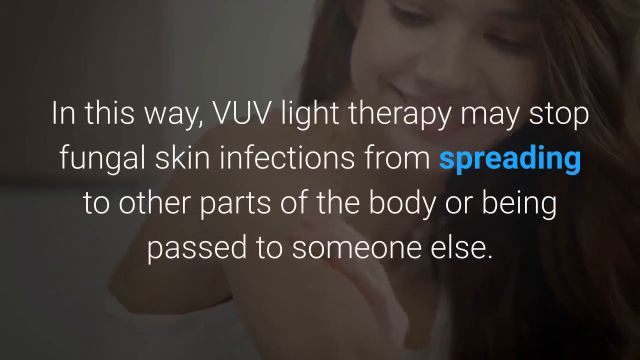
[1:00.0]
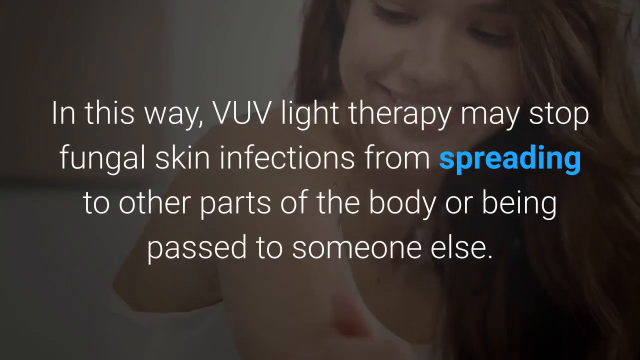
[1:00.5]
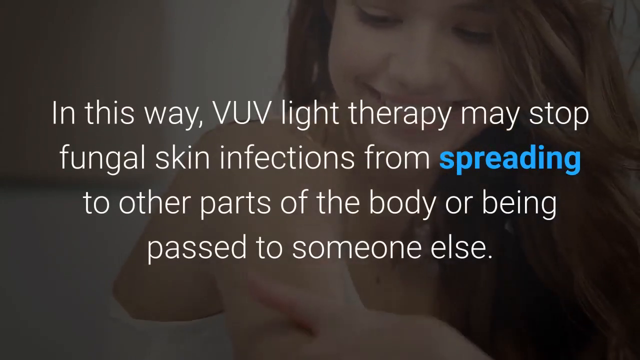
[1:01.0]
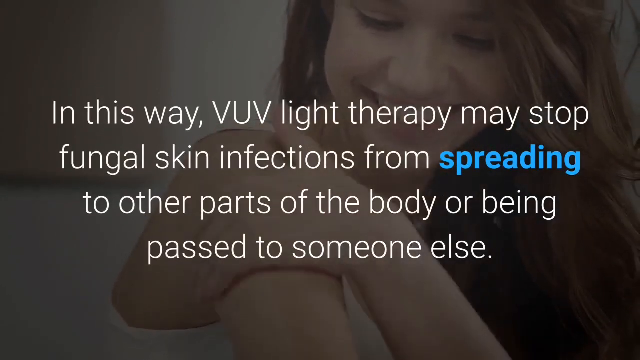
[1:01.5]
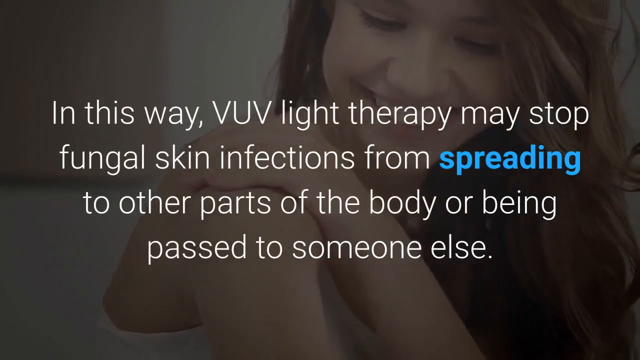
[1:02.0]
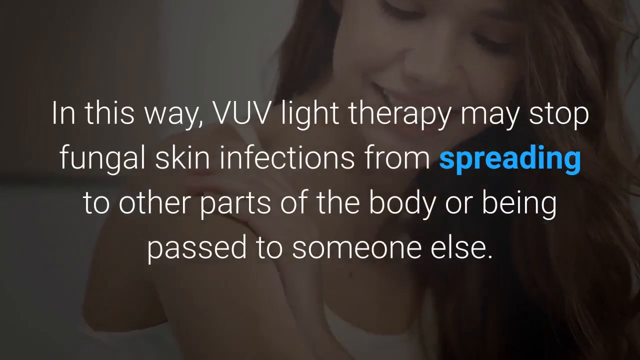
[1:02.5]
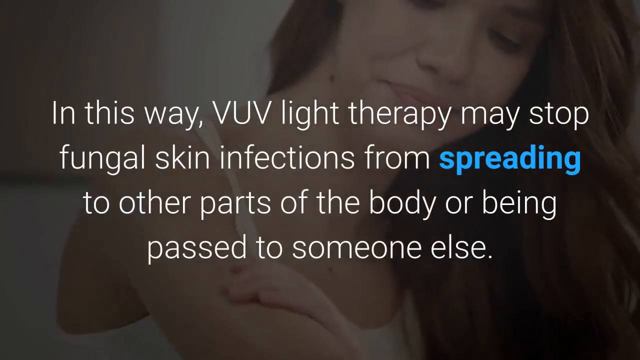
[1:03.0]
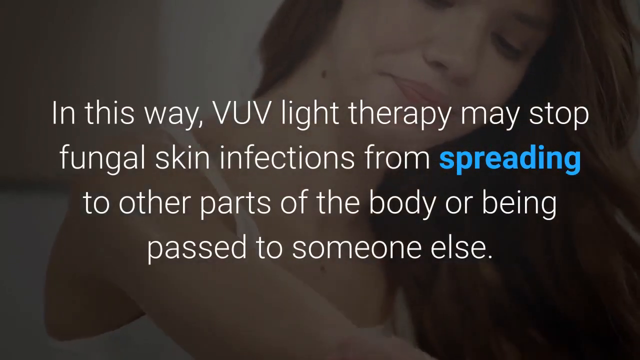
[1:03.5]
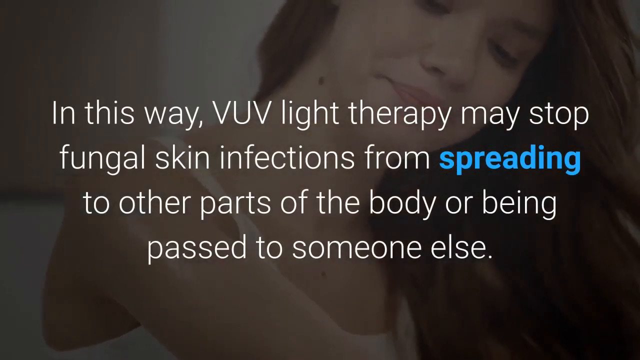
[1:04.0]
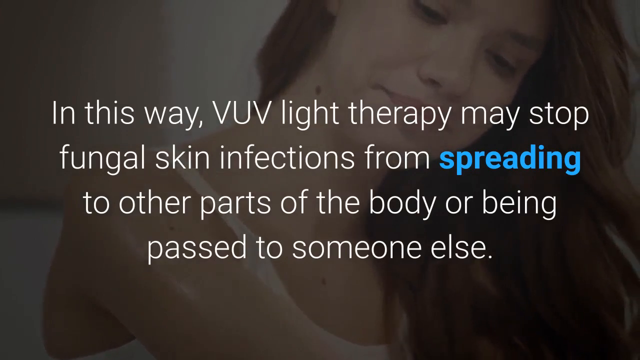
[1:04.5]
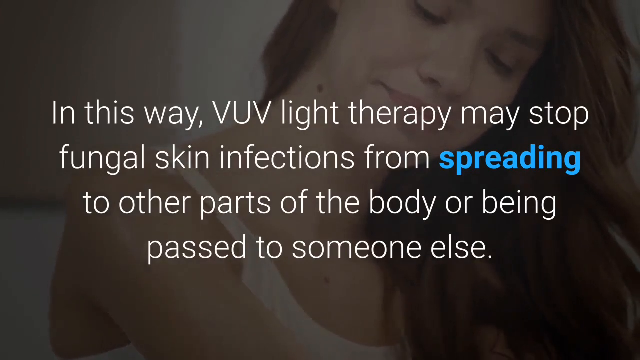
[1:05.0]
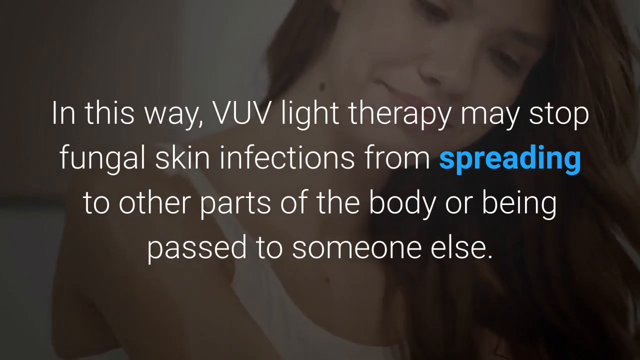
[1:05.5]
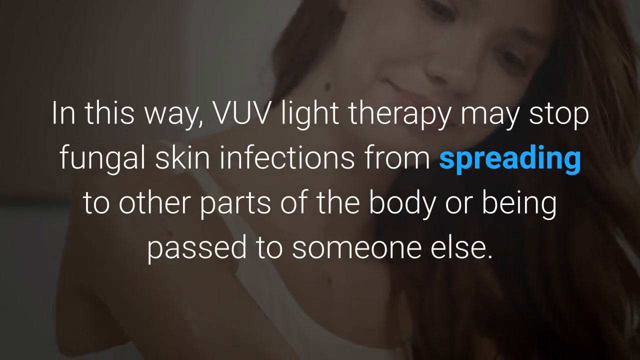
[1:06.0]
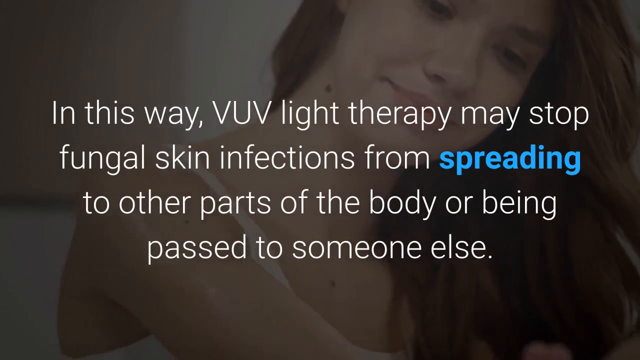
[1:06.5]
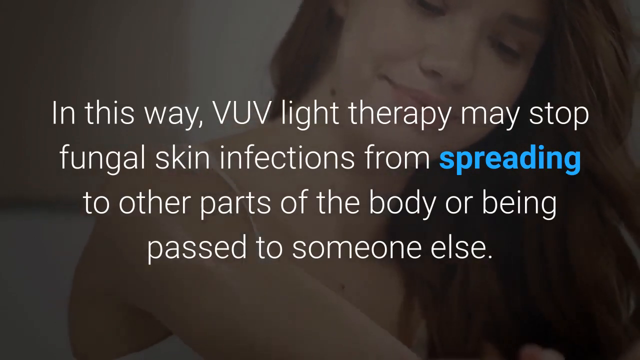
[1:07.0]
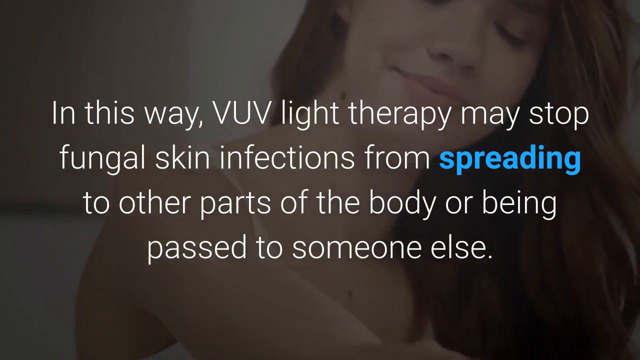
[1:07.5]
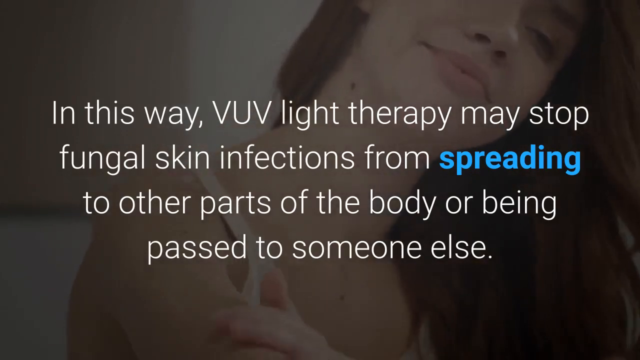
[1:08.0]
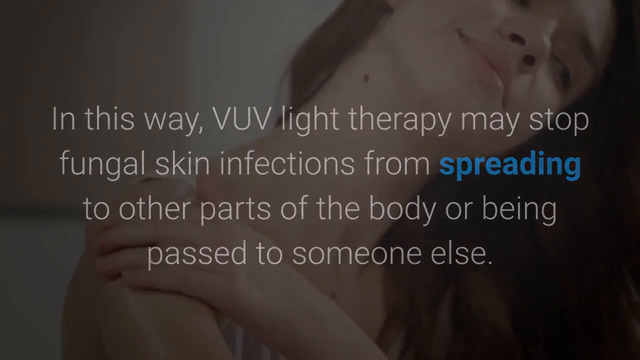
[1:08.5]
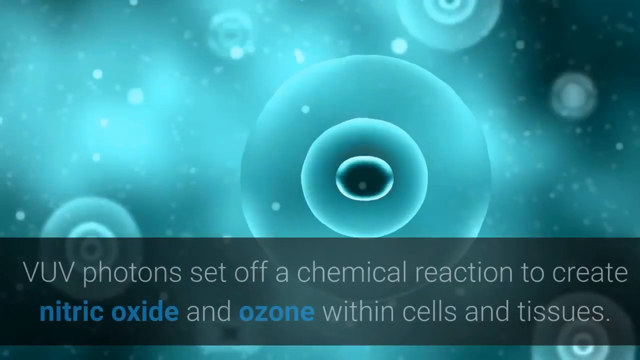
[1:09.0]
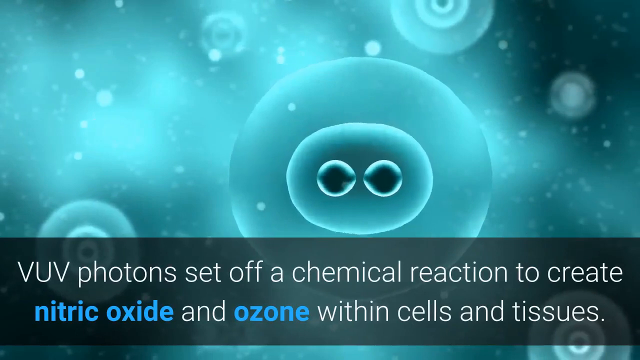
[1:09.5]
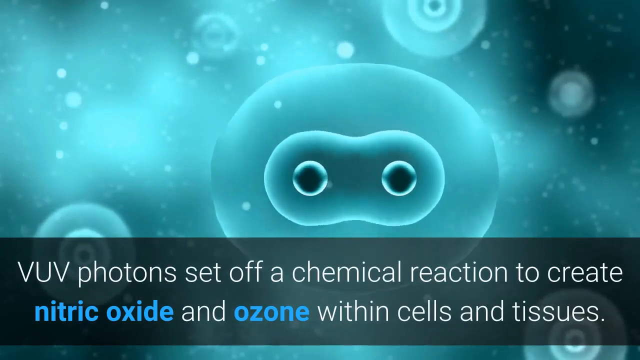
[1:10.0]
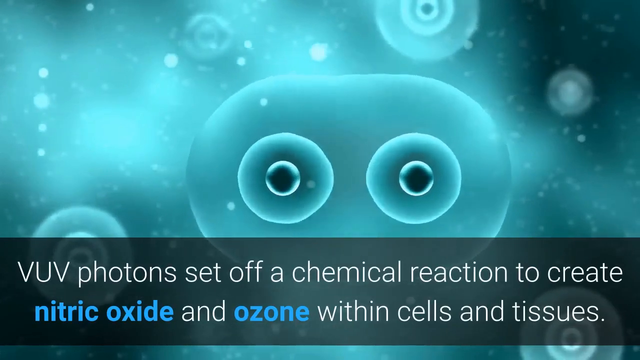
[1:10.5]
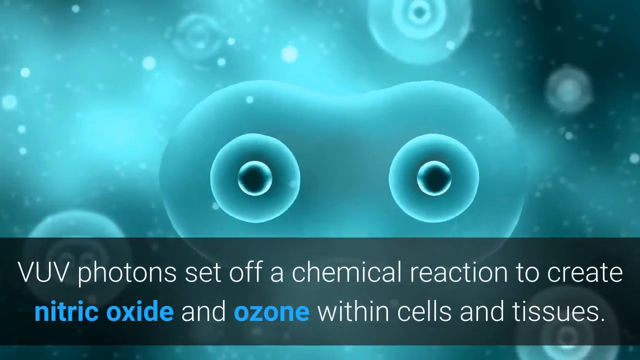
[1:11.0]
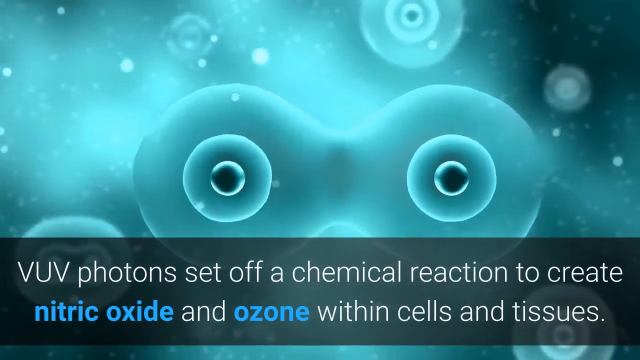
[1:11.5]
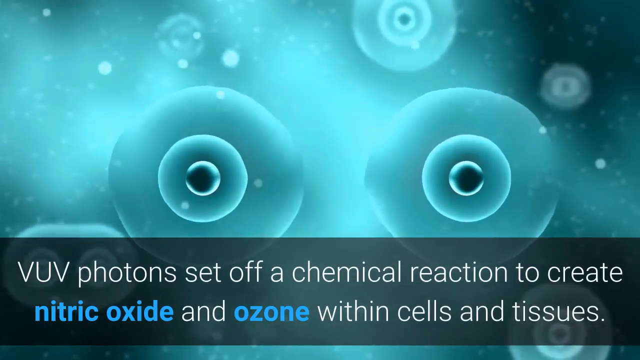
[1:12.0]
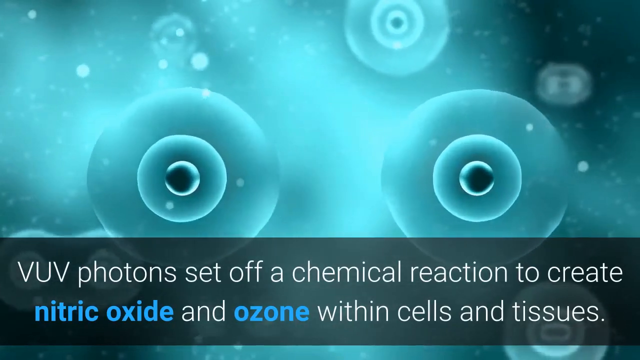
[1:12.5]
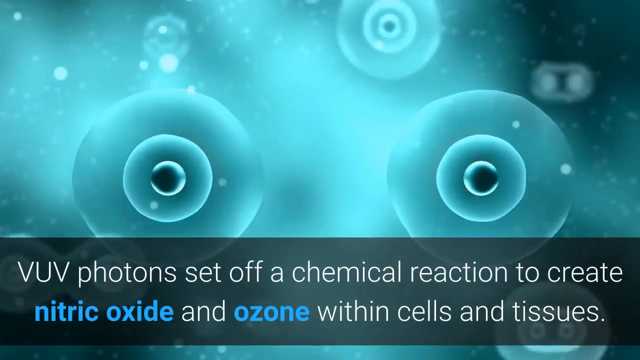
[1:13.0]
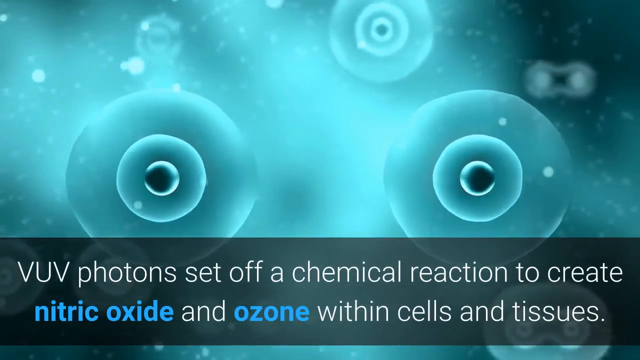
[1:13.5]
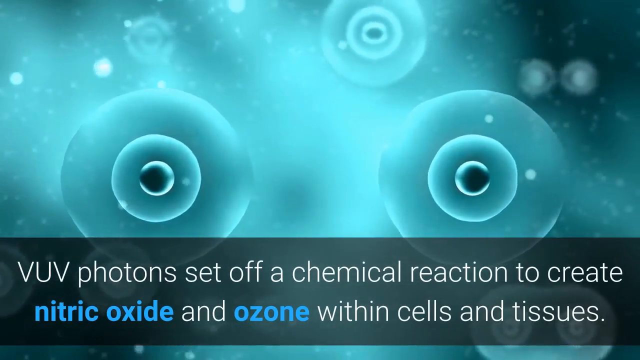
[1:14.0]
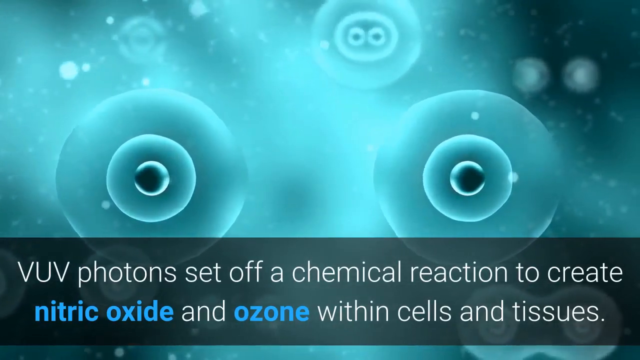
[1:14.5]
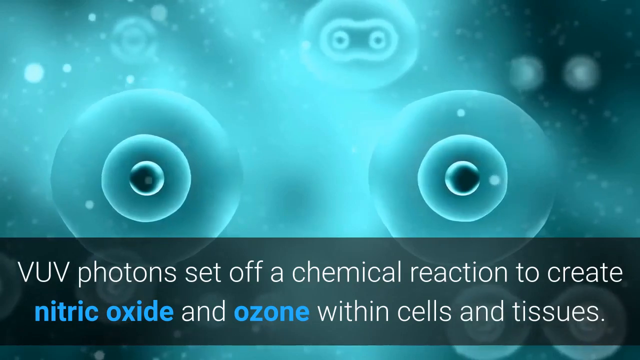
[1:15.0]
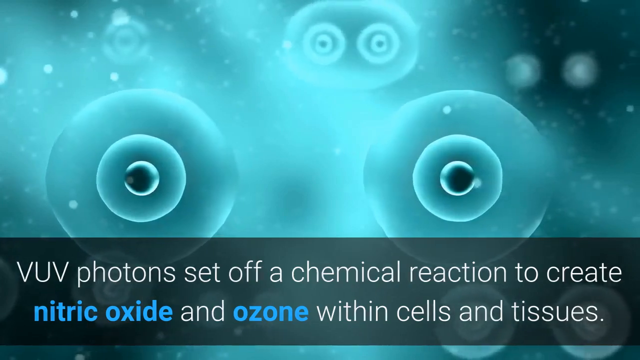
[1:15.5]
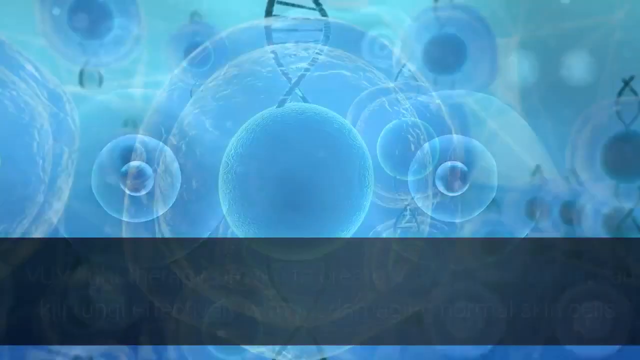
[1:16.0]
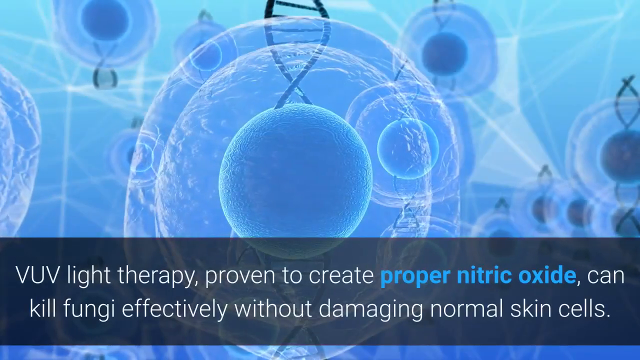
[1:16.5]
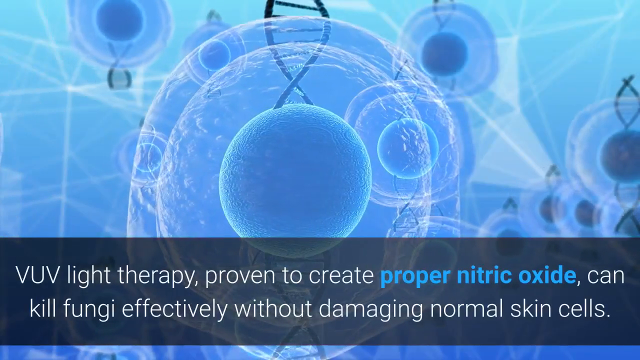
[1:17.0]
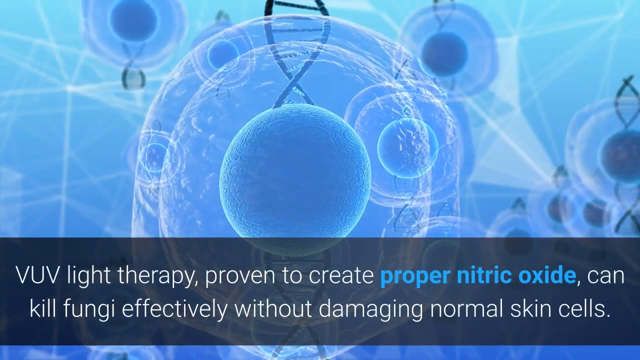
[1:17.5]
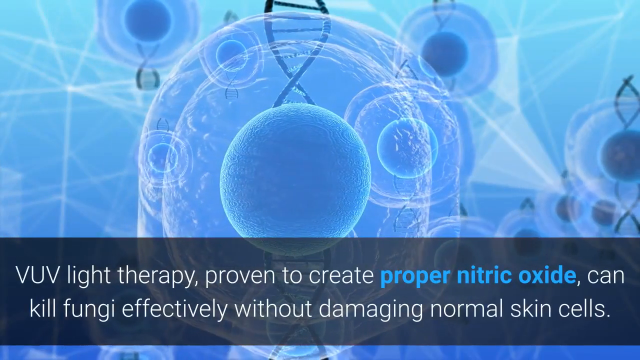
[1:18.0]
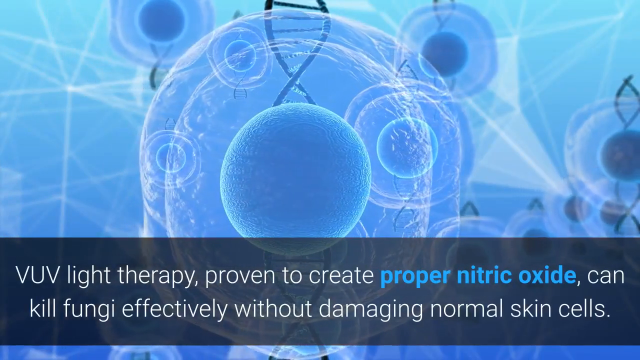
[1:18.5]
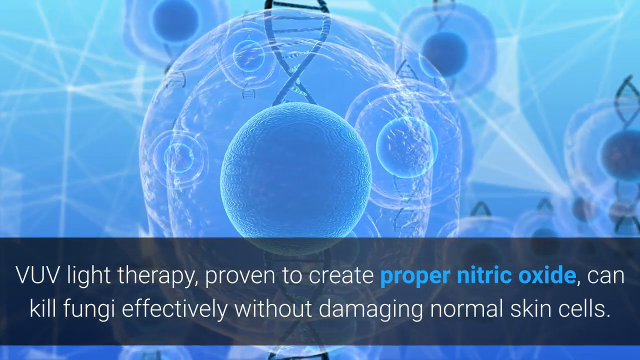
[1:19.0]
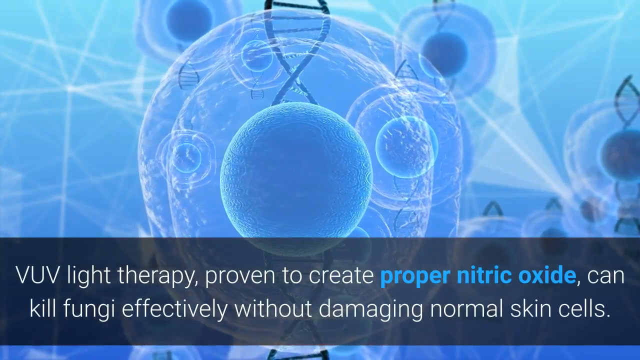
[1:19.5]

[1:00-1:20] A woman with dark hair is right of center. Her shoulder appears to face the camera while her head is turned toward the camera, her eyes looking down toward her shoulder, which she rubs with the opposite hand in a swirling motion. Text over the image reads "in this way, VUV light therapy may stop fungal skin infections from spreading to other parts of the body or being passed to someone else", with "spreading" in blue and the rest in white. Next comes a teal image with white spots that make it look as if it is glowing; it looks to be a CGI animation. Six orbs are visible: the largest in the center, and five smaller ones, one in the bottom right corner, one near the left corner, two near the center at the top, and one toward the upper right corner. They have an inner and an outer circle, and some have an inner, middle and outer circle. The center one has a middle and an outer circle with two small inner circles side by side. The text at the bottom reads "VUV protons set off a chemical reaction to create nitric oxide and ozones within cells and tissues." The middle part of the cell separates, the inner circles spread apart, and then the outer circle separates, leaving two identical ones, one on the left and one on the right; another in the background also separates. A new screen shows a blue orb with a translucent shell around it and another translucent shell around that, with a DNA spiral coming off the top of the circle. The main one is in front, just left of center, with more in the background, which float from left to right. The text at the bottom reads "UV light therapy proven to create proper nitric oxide can kill fungi effectively without damaging normal skin cells."